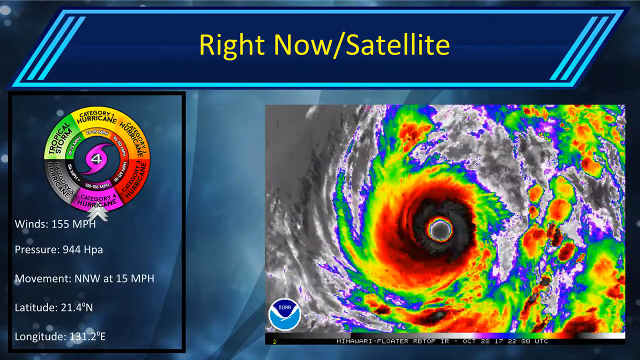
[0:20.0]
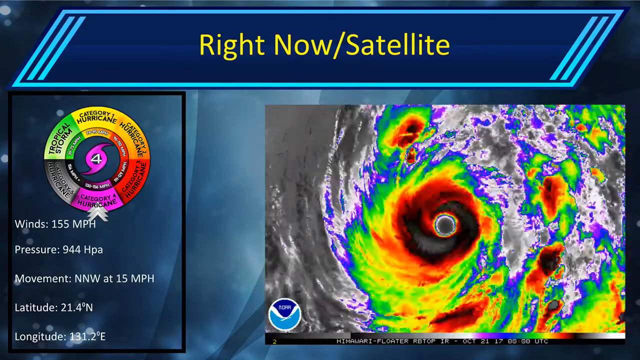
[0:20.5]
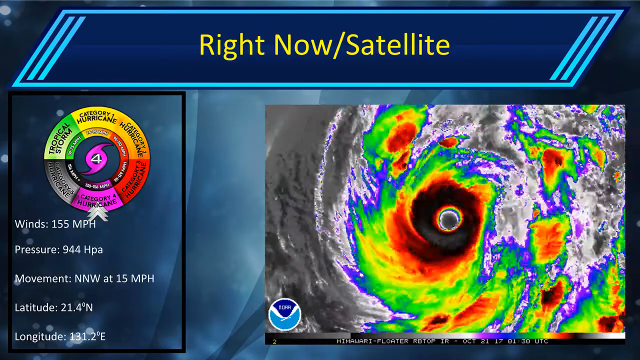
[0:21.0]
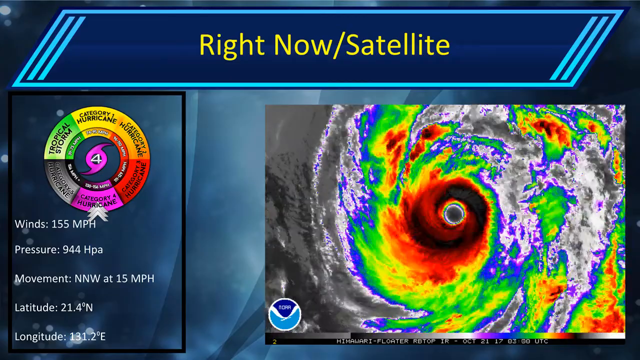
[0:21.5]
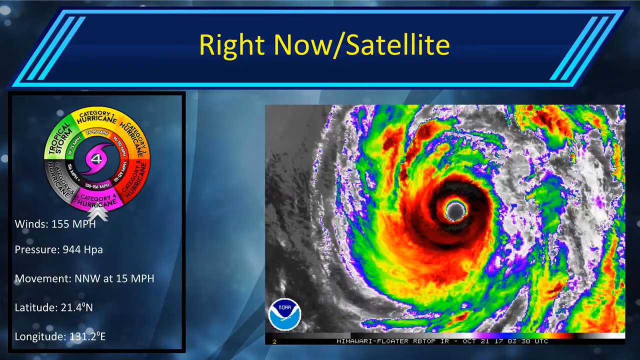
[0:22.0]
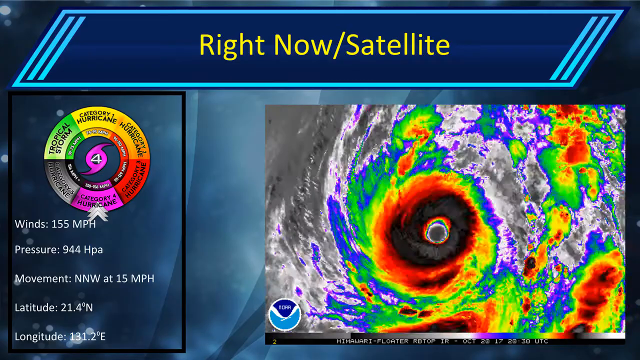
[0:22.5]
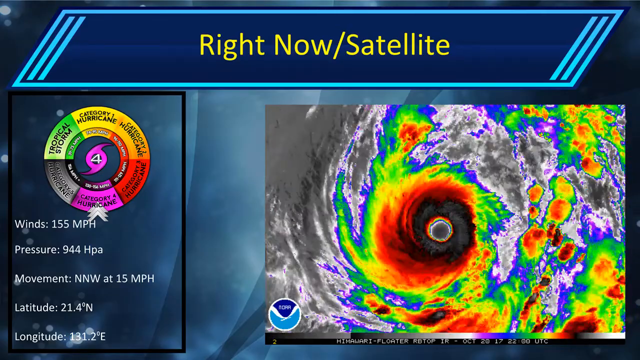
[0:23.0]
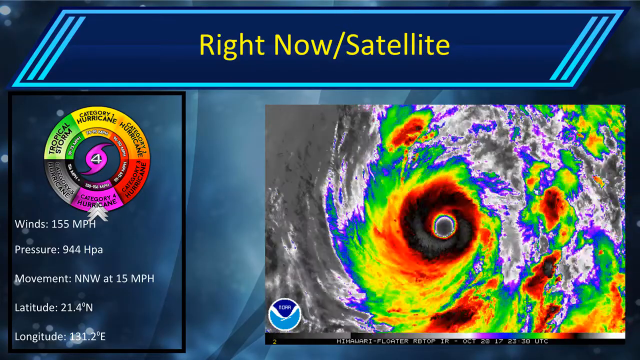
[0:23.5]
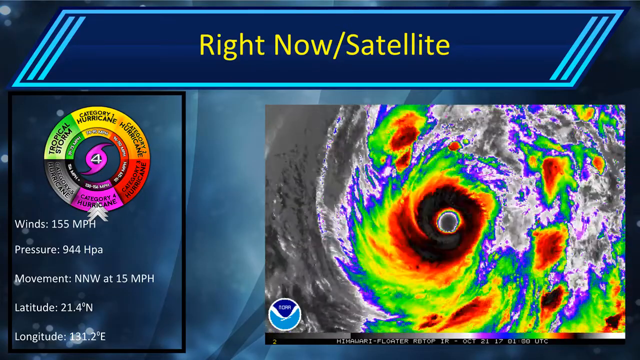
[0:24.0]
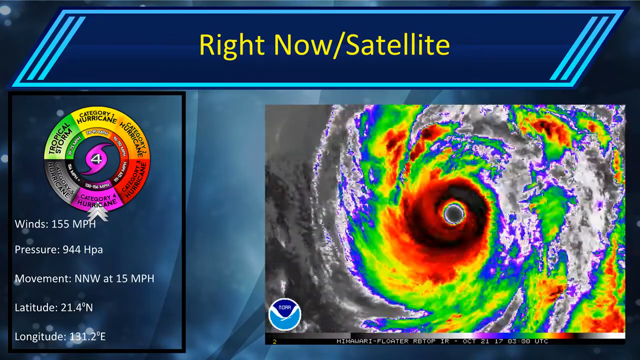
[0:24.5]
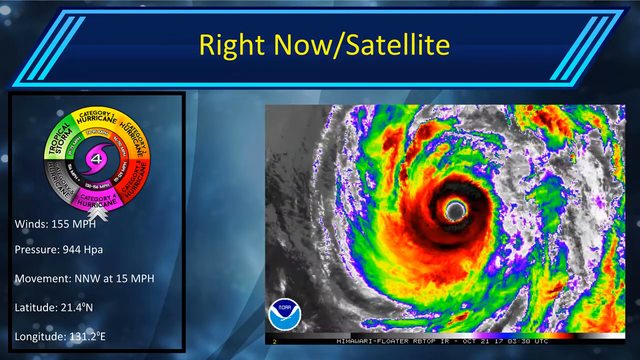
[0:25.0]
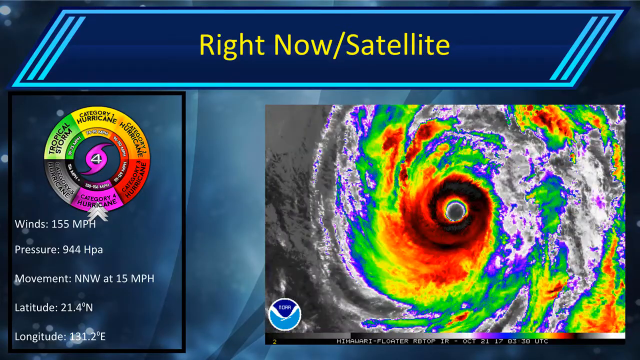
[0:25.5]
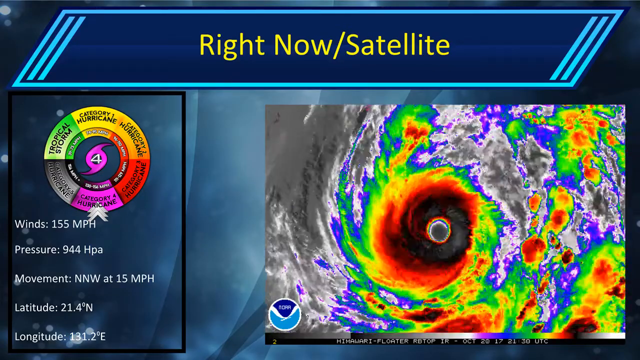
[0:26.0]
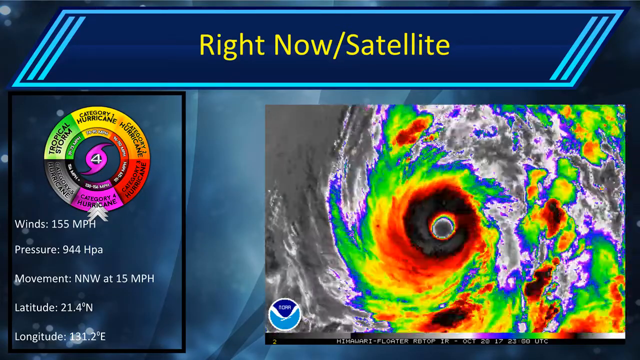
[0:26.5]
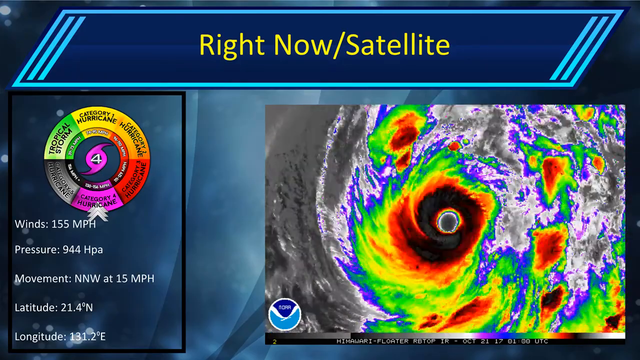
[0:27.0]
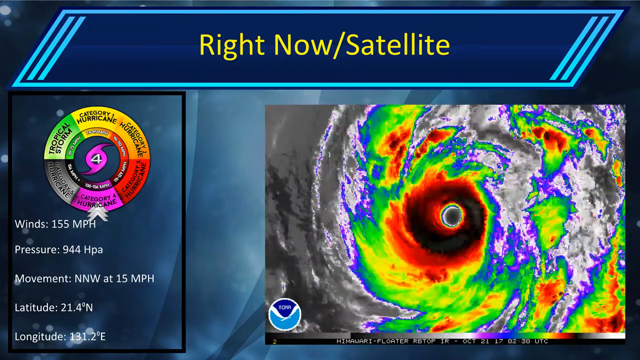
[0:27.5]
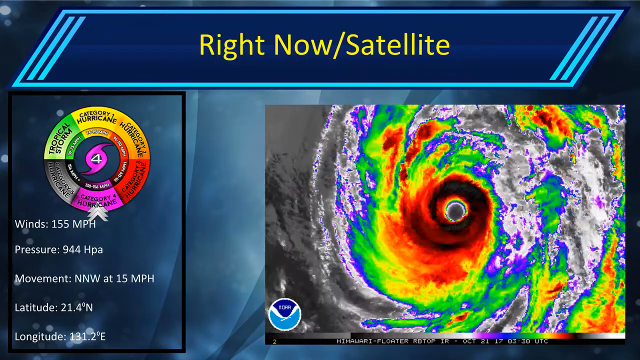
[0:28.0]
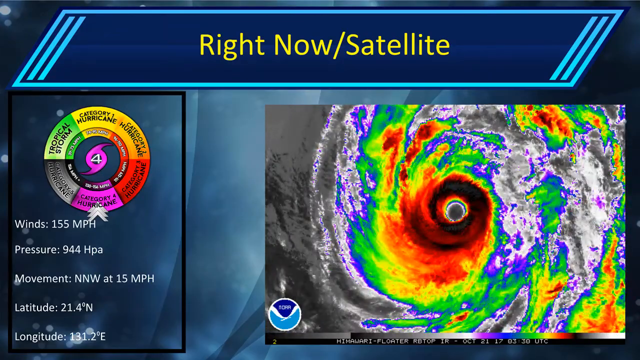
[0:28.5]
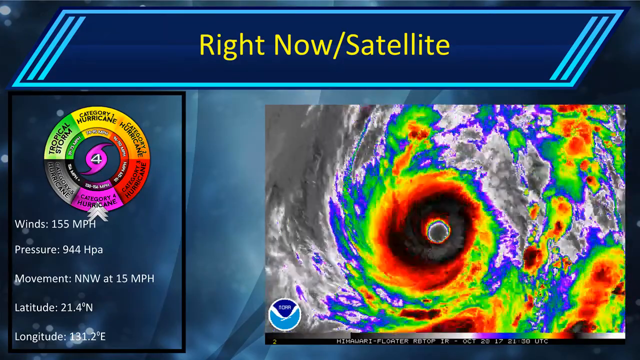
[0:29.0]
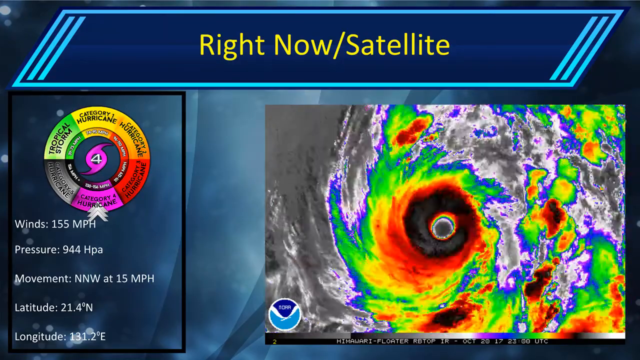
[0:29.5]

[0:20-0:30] The satellite screen remains, showing the storm and its category. On the right side of the screen is a live look at the storm moving, with the eye visible. The colors are bright greens, oranges and reds, with black in the center of the storm, depending on the strength of the storm. On the left are the different categories in a wheel: Category 1, Category 2, Category 3, Category 4, Category 5 and Tropical Storm, each with a different color representing it. Below the wheel is a set of measurements: winds, pressure, movement, latitude and longitude. The wind speed is 155 mph, the pressure is 944 hPa, the movement is NNW at 15 mph, the latitude is 21.4 degrees north and the longitude is 131.2 degrees east.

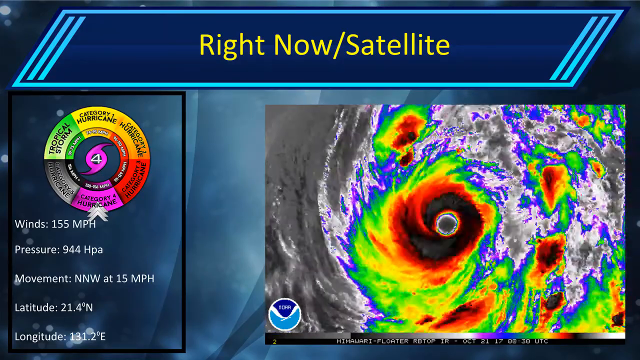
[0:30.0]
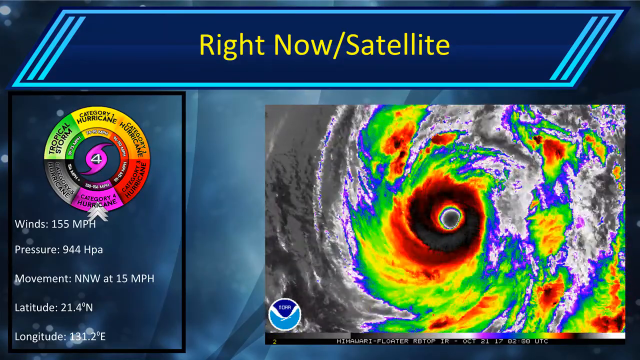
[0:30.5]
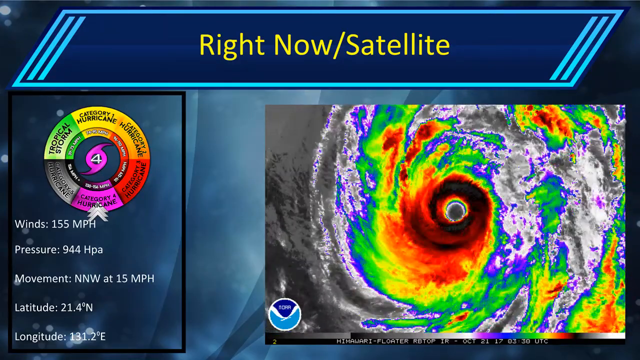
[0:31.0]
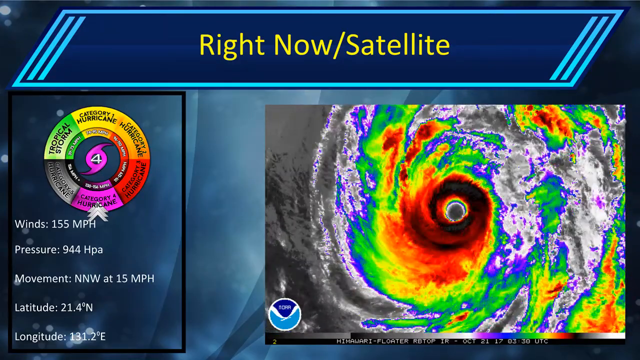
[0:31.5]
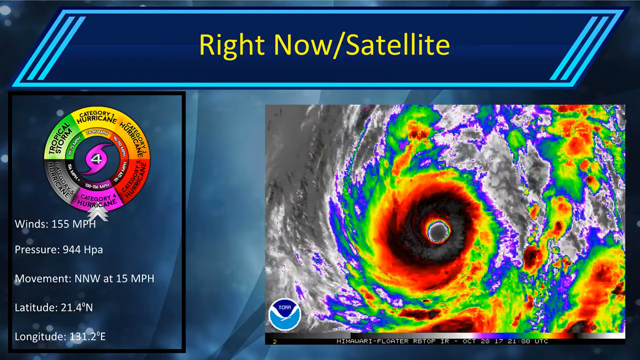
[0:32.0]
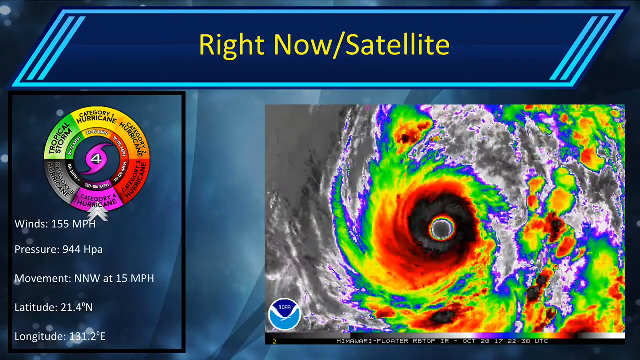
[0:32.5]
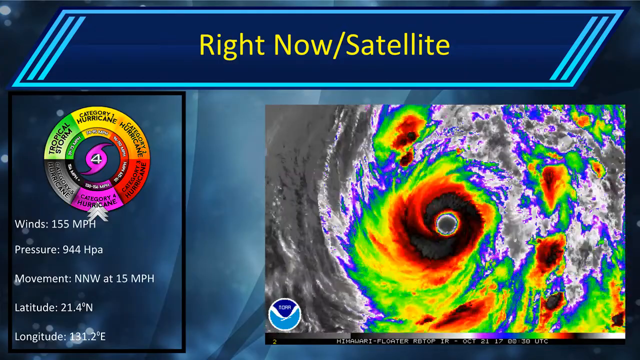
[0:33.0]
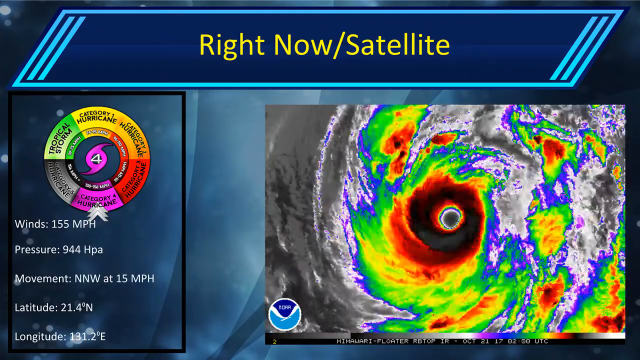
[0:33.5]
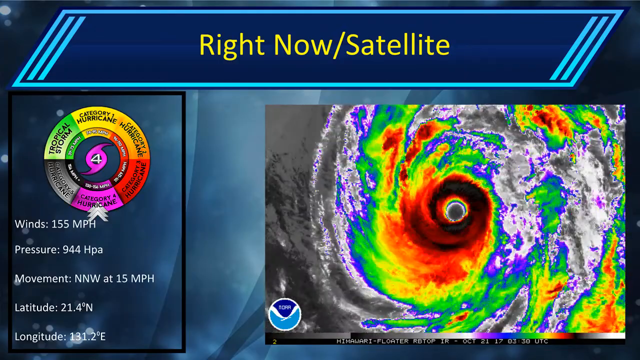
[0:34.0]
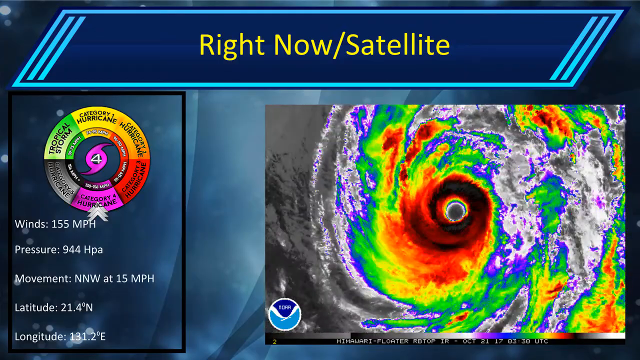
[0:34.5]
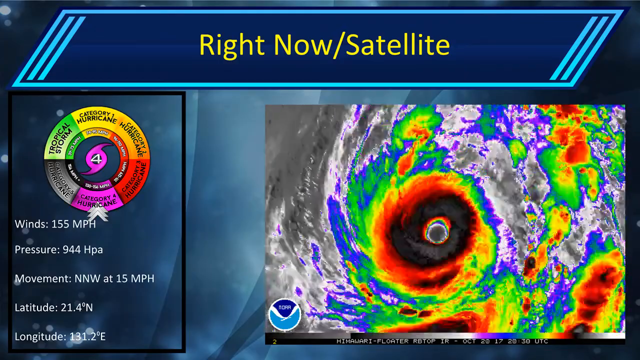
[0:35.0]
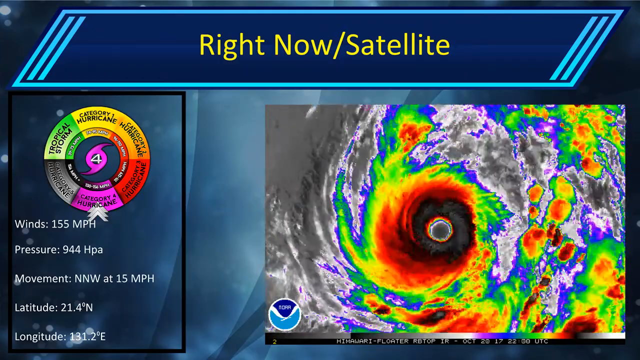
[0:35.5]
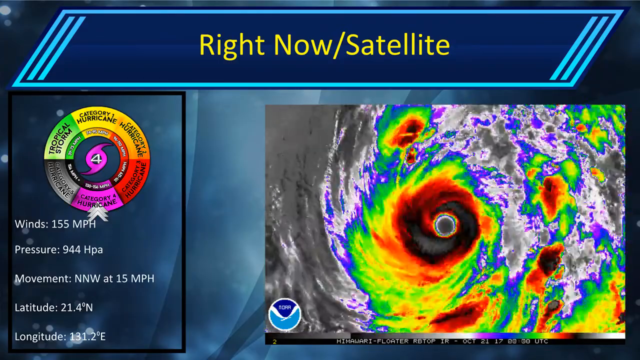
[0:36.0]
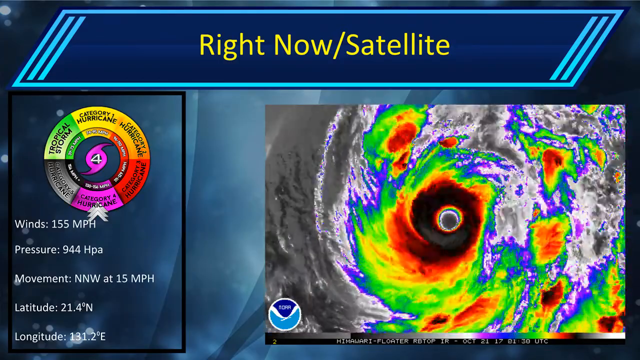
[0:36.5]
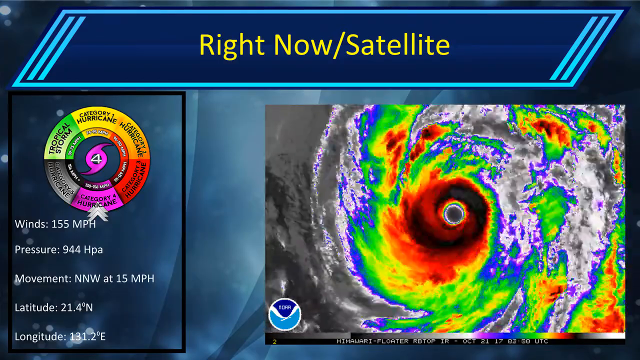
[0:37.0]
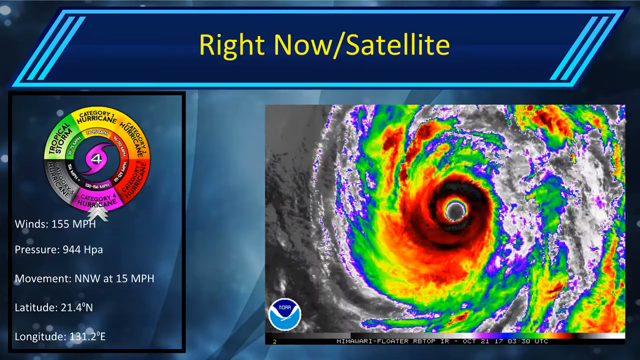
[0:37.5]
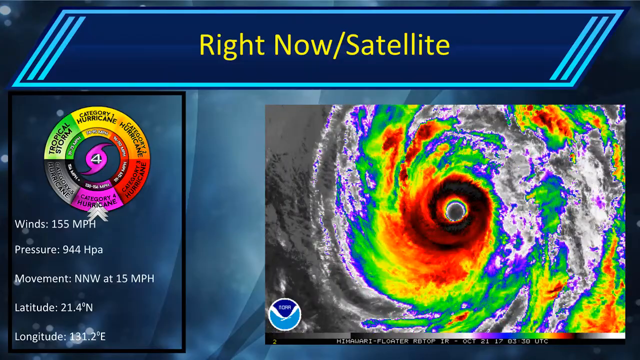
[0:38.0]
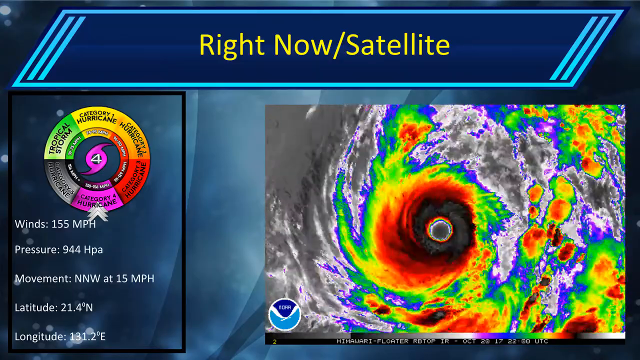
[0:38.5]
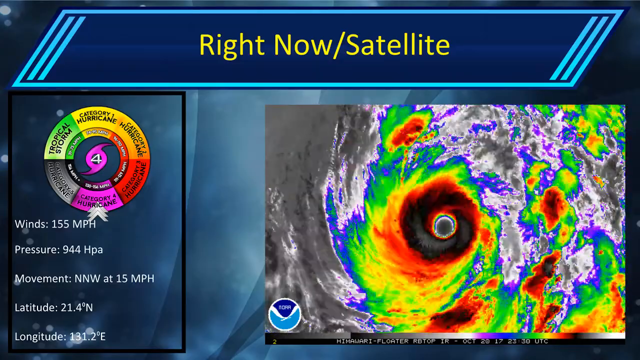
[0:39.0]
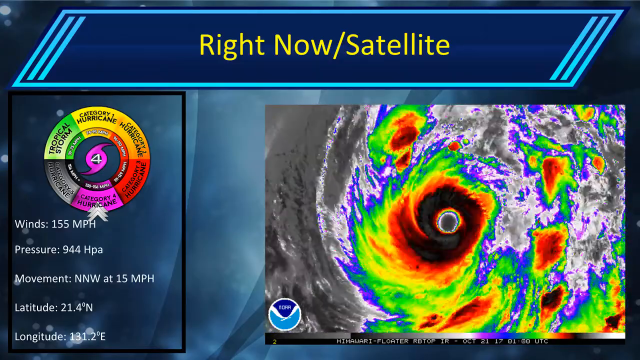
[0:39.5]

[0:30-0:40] The right now satellite screen continues, with the storm in a live movement shot at the bottom right and the wheel showing the statistics on the left. A thin black border surrounds the wheel and storm stats on the left side, forming a vertical rectangle. Behind everything is a blue background similar to the earlier space background, with these images on top of it. The storm continues to move slightly. It looks very powerful, with the wheel's selection on Category 4. The Category 4 hurricane on the wheel is pink, and a small white arrow on the wheel points at it. In the center of the wheel is a small storm logo with the number 4 inside it, also pink, the Category 4 color, representing the current category.